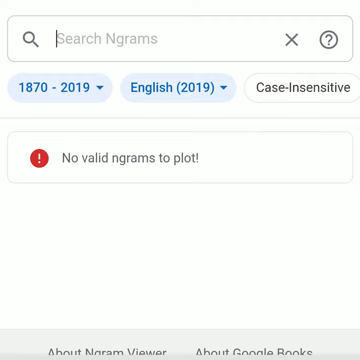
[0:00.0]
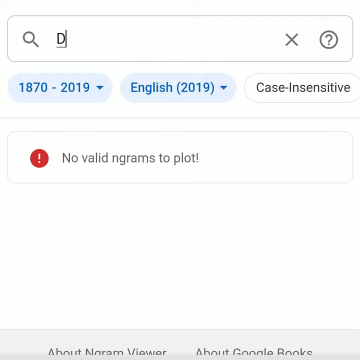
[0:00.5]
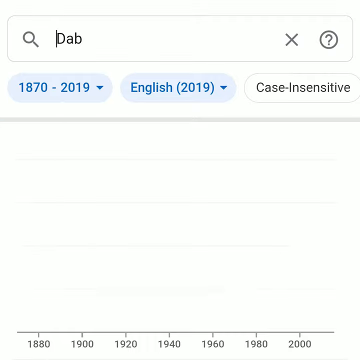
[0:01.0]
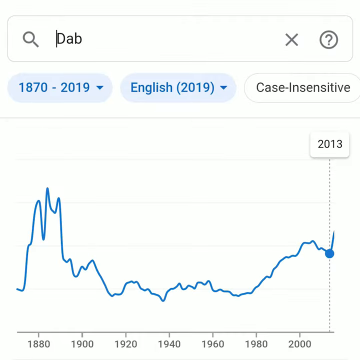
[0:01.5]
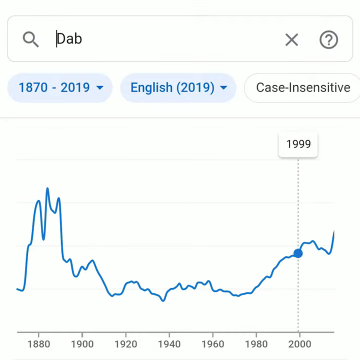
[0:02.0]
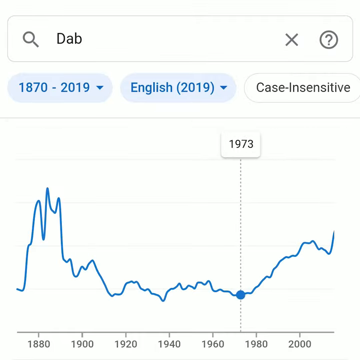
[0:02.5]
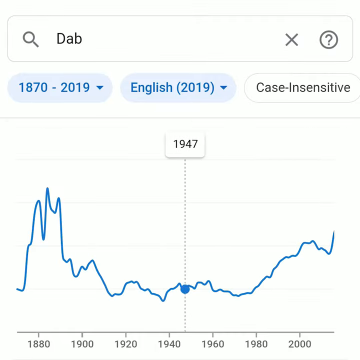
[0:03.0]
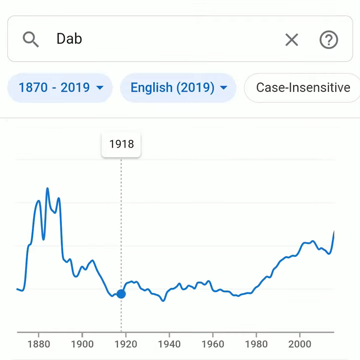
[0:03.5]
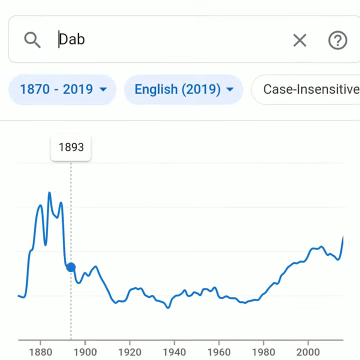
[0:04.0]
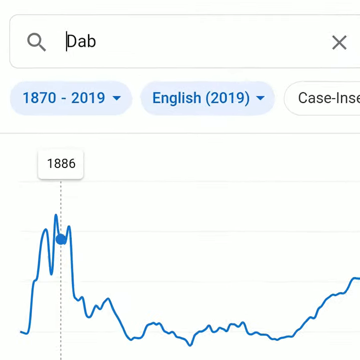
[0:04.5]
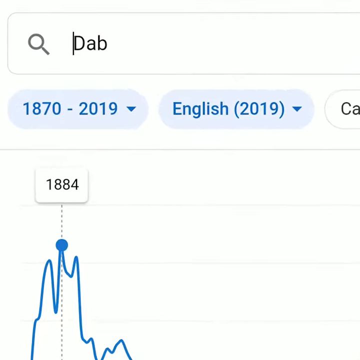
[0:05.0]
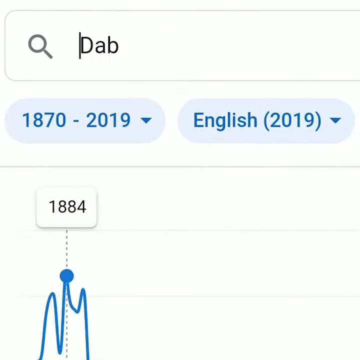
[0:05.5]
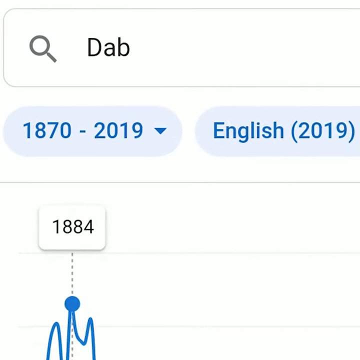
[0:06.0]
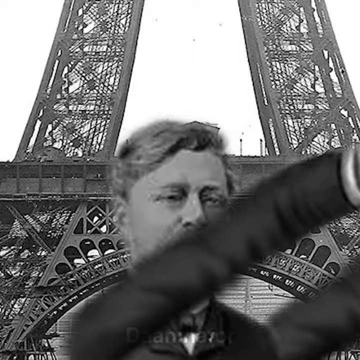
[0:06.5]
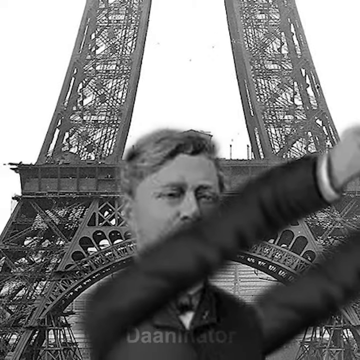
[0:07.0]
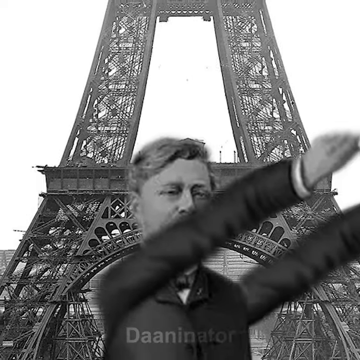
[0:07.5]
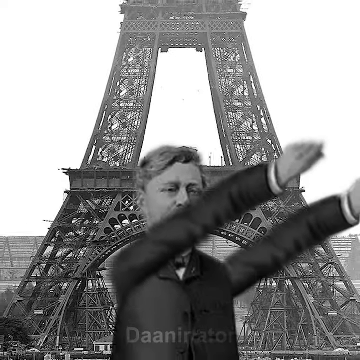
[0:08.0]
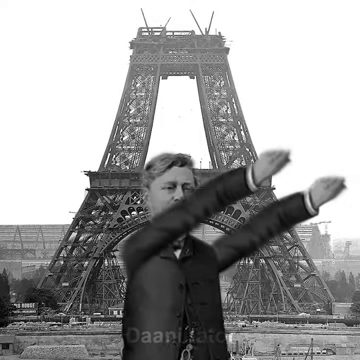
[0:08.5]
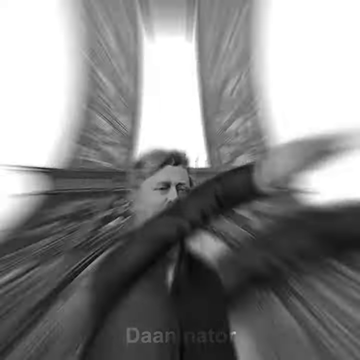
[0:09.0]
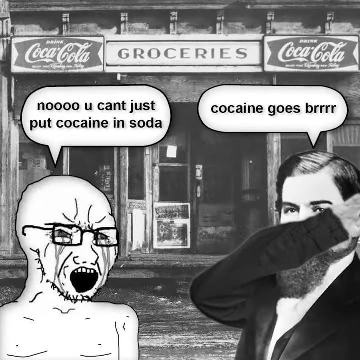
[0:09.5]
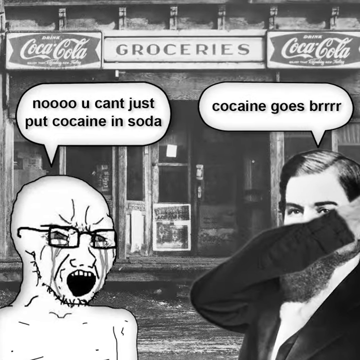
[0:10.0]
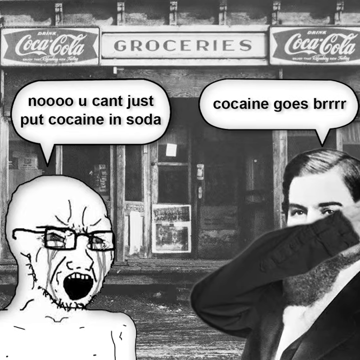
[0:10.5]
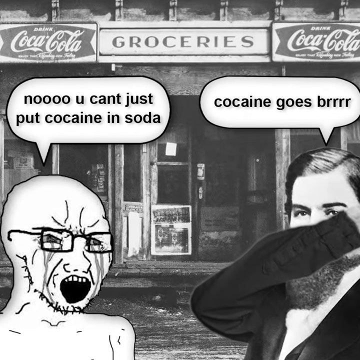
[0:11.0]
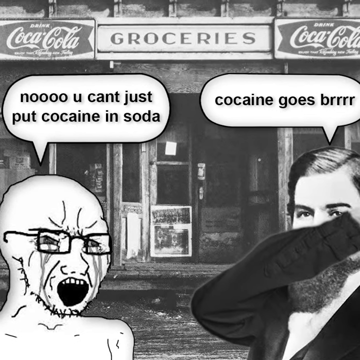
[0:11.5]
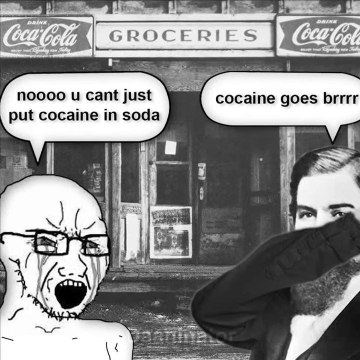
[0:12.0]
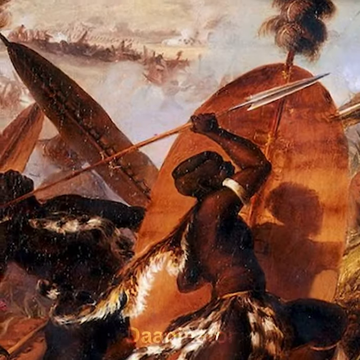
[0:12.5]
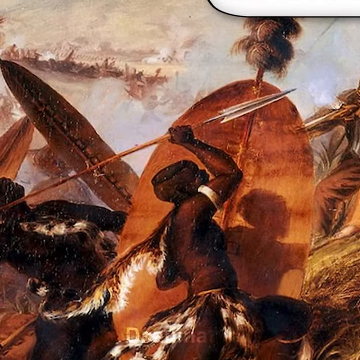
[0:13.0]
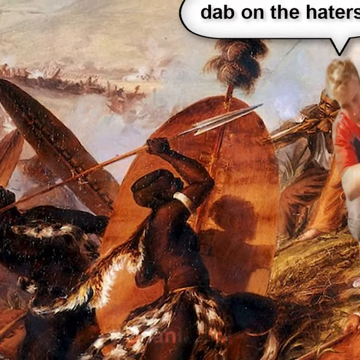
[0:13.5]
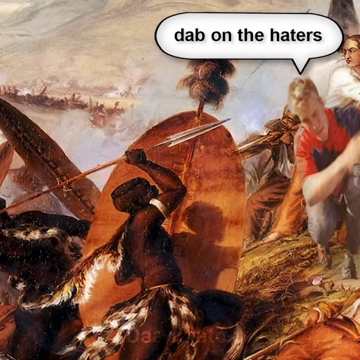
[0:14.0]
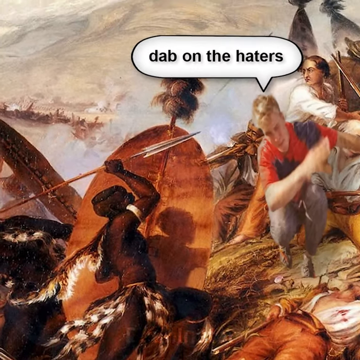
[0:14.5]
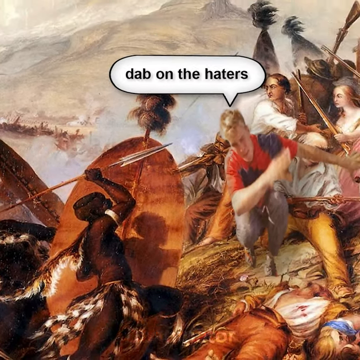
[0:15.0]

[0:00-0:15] This absurd comedy video is about Dab, the term "Dab." It starts with a line graph that goes back to the year 1884, followed by scenes from that period. One scene shows a man in period dress in front of an unfinished Eiffel Tower. Next comes a cartoon of two other characters in front of a grocery store: one says you can't put cocaine in Coca-Cola, or in soda, and the other says cocaine is brr. The final scene looks like an African tribe, armed with spears and shields, attacking a group of white settlers, and a photograph of a modern person seems to be superimposed into that image as well.